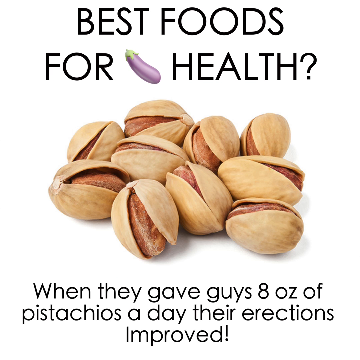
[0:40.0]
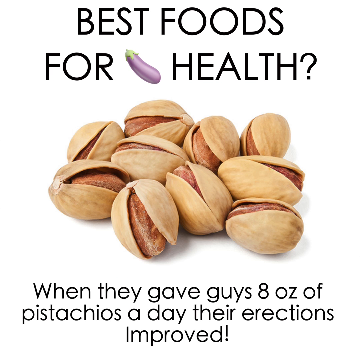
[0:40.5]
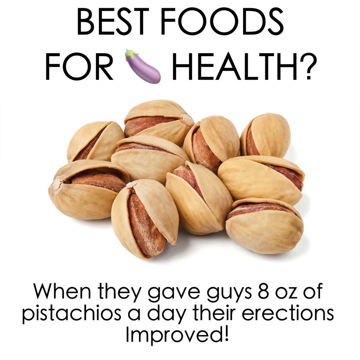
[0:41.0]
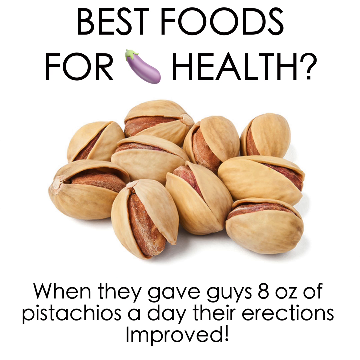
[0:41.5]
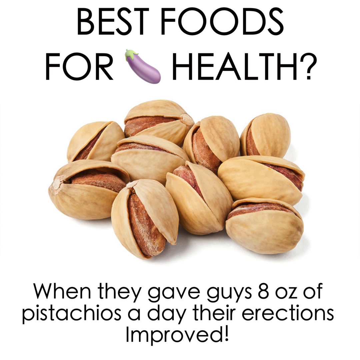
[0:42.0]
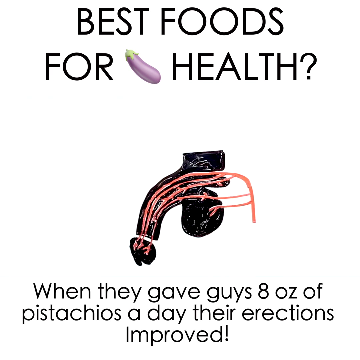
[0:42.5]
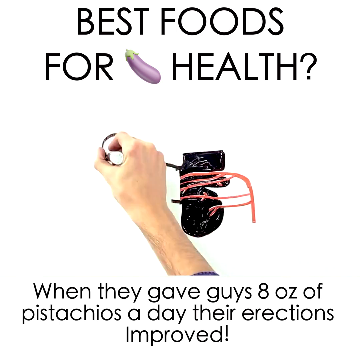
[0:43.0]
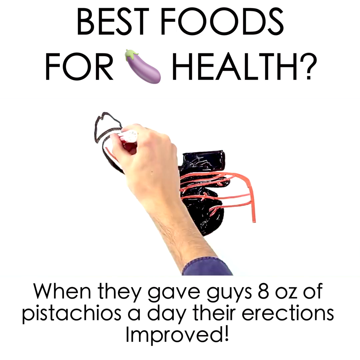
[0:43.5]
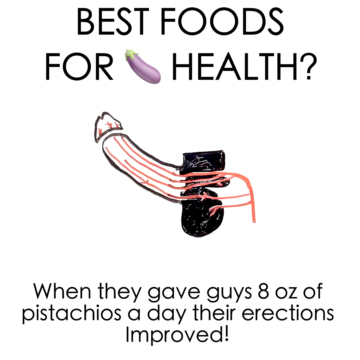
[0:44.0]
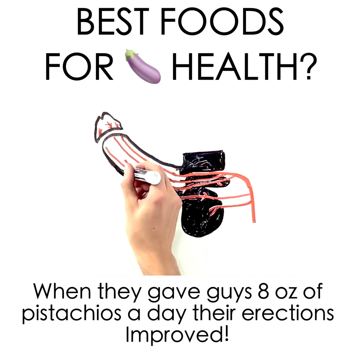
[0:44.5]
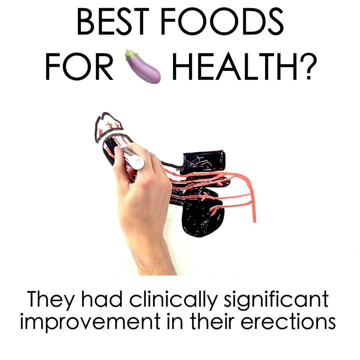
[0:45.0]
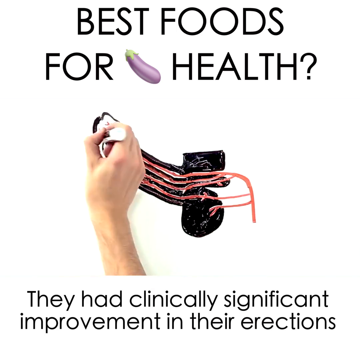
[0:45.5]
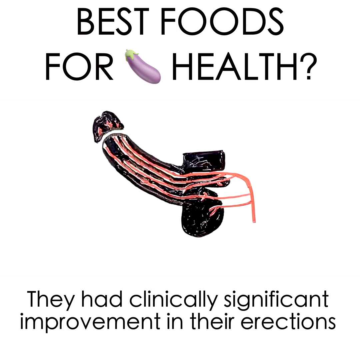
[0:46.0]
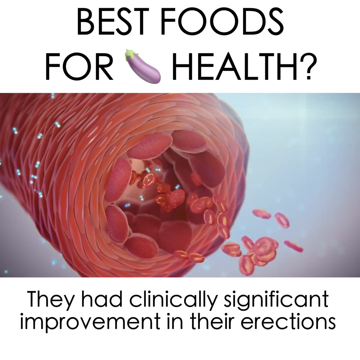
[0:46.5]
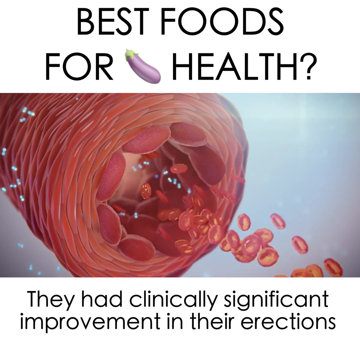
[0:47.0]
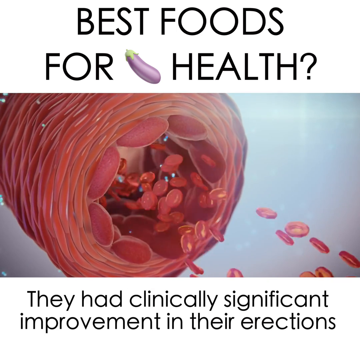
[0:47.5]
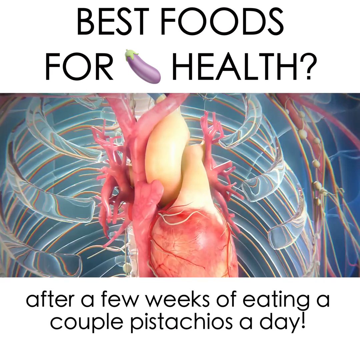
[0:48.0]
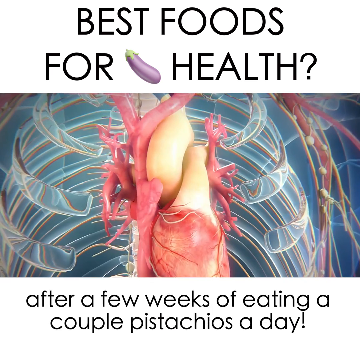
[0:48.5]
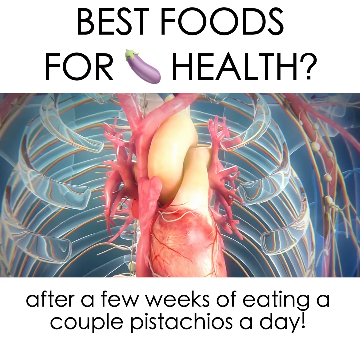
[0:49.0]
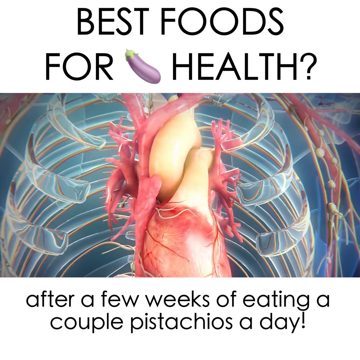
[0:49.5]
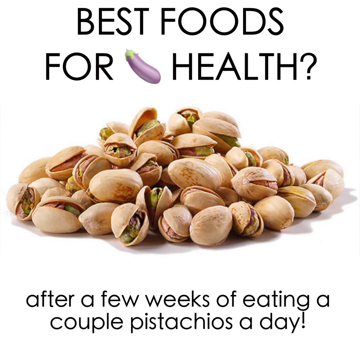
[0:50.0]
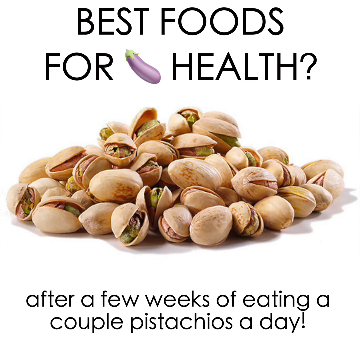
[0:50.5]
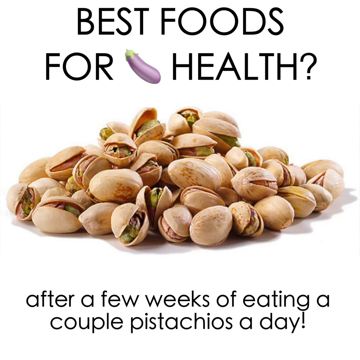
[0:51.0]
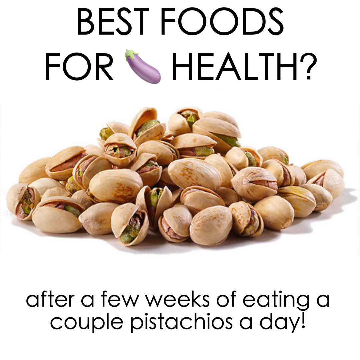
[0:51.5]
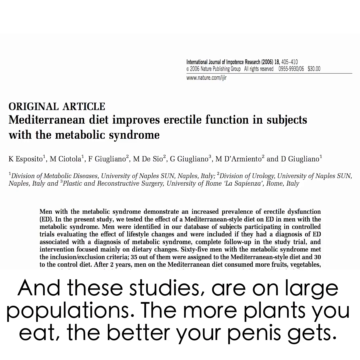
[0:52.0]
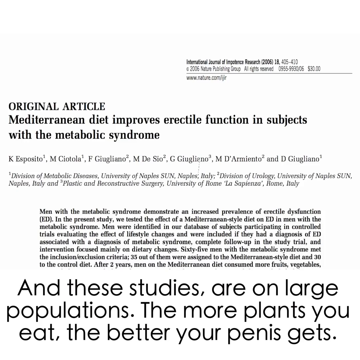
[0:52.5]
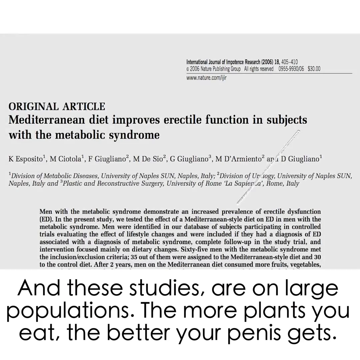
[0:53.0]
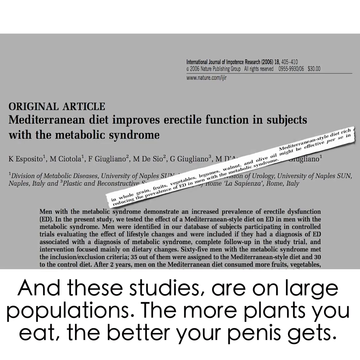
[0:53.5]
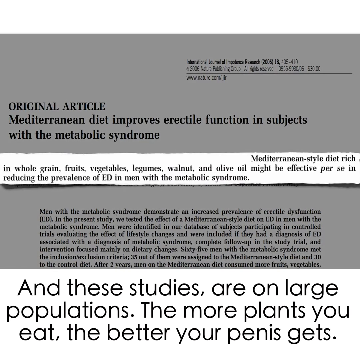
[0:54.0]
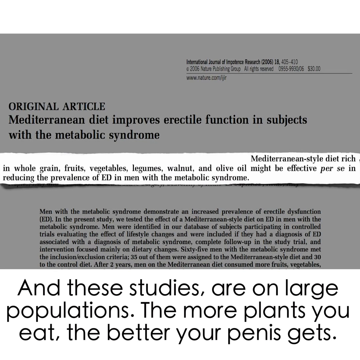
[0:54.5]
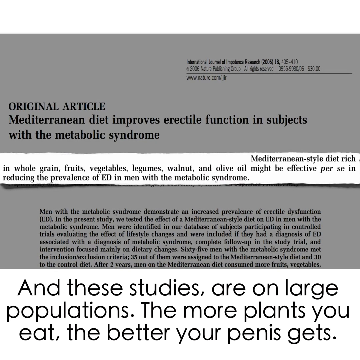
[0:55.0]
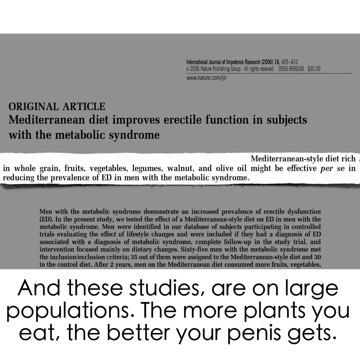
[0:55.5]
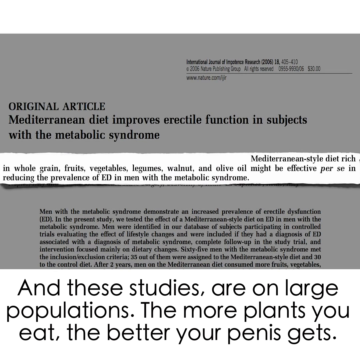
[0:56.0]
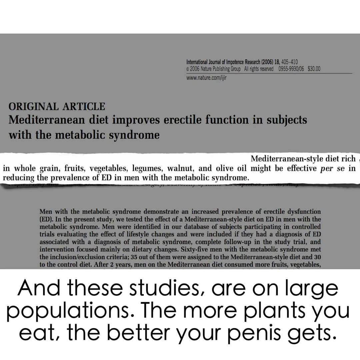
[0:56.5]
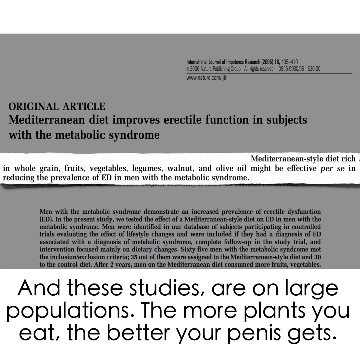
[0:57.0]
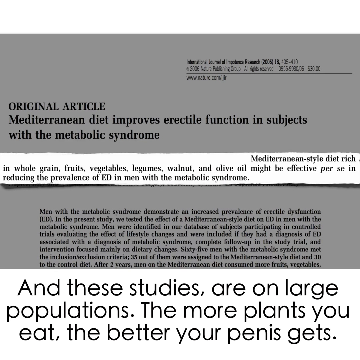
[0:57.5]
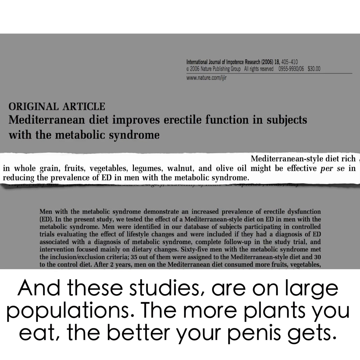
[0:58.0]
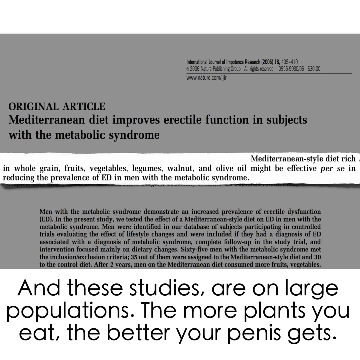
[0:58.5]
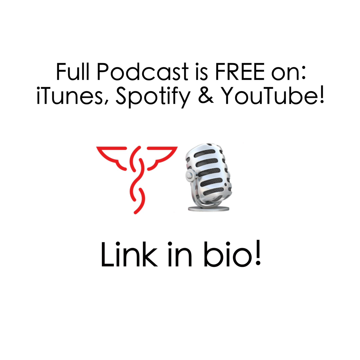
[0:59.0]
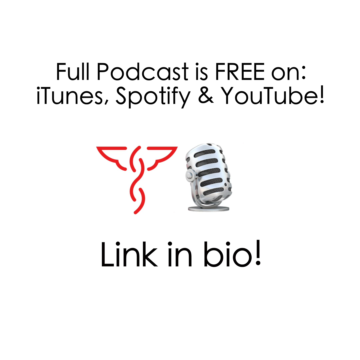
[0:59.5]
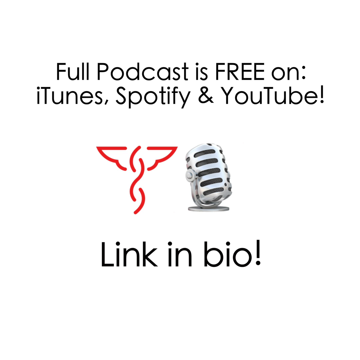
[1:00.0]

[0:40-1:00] A photo of pistachios is shown. Above it, black-on-white text reads "best foods for health", with an emoji of an aubergine after the word "for". Across the bottom, black-on-white lowercase text reads "when they gave guys eight ounces of pistachios a day, their erections improved". The photo of the pistachios disappears and is replaced by footage of a human hand holding a black marker, drawing a picture of an erection. Next is a medical diagram of a red tube with red discs floating out of it from left to right. Another medical animation follows, depicting the heart beating inside the ribcage, which is transparent for illustrative purposes. This is replaced by a photo of an article, with text at the top reading "original article Mediterranean diet improves erectile function in subjects with the metabolic syndrome". The camera zeroes in on some text from the article highlighted in a brighter white, which reads "Mediterranean style diet rich in whole grain fruits vegetables legumes walnut and olive oil might be effective per se in reducing the prevalence of ED in men with the metabolic syndrome". Text across the bottom of the screen reads "and these studies are on large populations the more plants you eat the better your penis gets". The final screen, the conclusion of the podcast, reads "full podcast is free on iTunes, Spotify and YouTube". Below that are two icons, one seeming to represent medicine with a snake and a pair of wings, the other a microphone, and below them the text reads "link in bio".